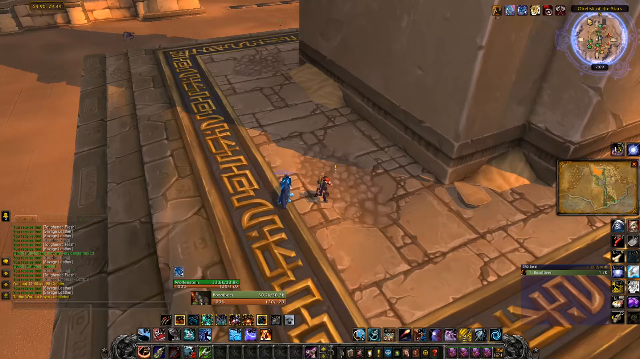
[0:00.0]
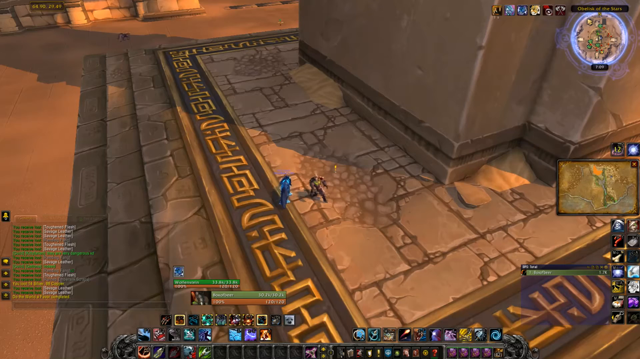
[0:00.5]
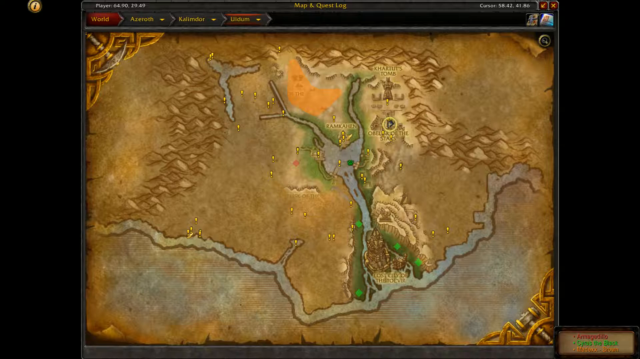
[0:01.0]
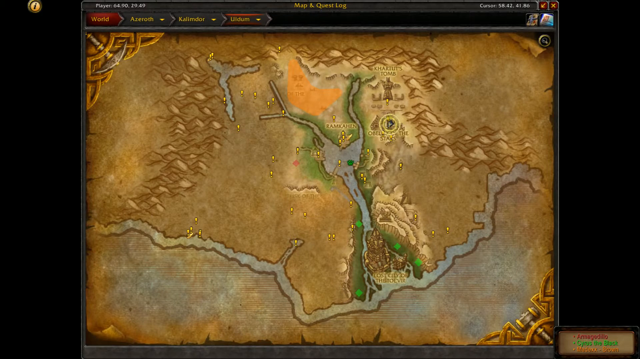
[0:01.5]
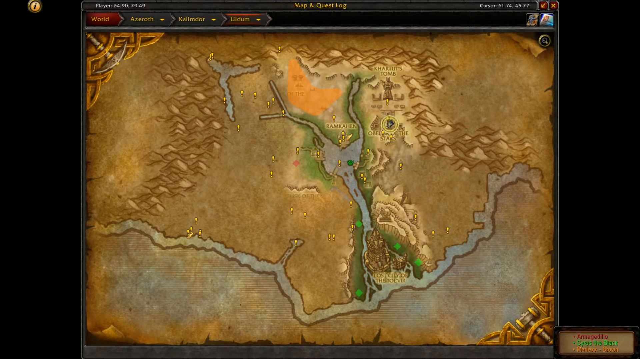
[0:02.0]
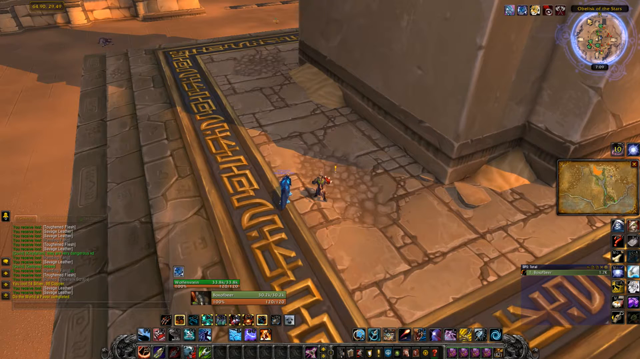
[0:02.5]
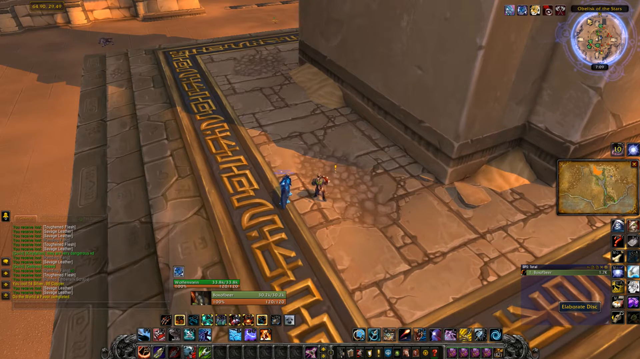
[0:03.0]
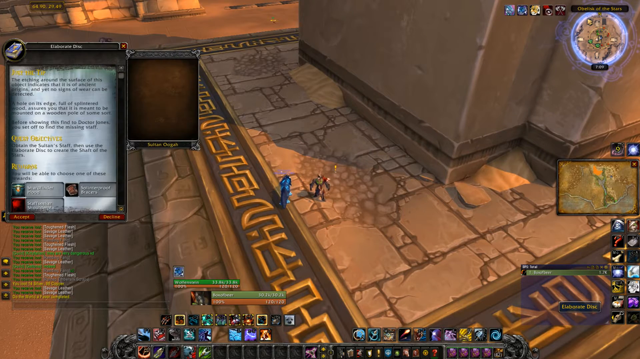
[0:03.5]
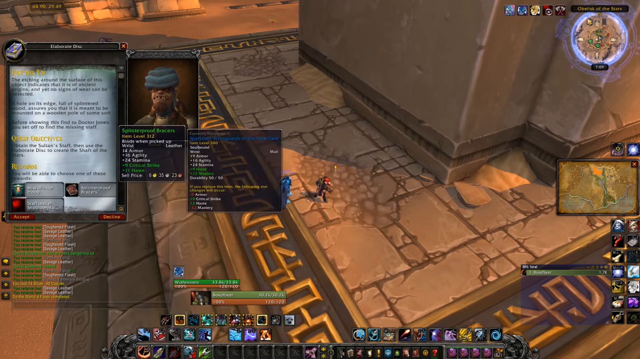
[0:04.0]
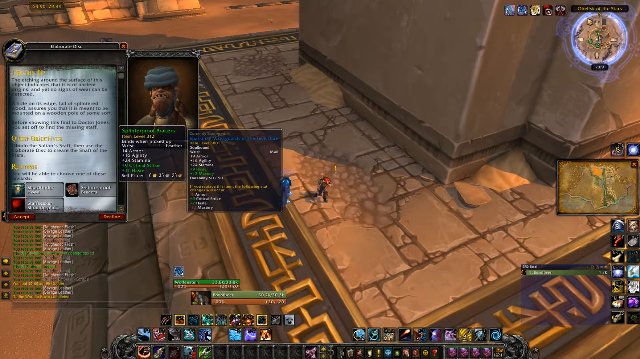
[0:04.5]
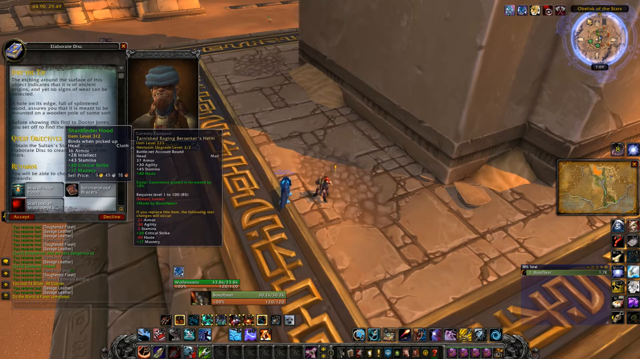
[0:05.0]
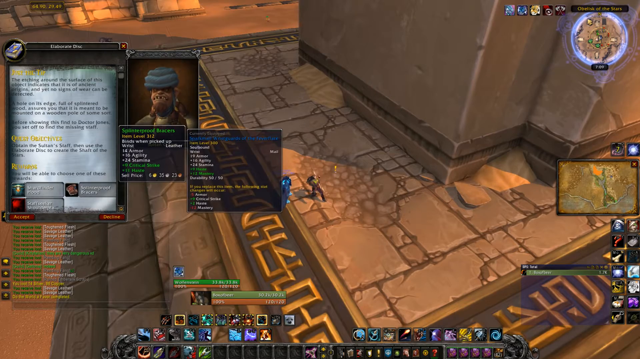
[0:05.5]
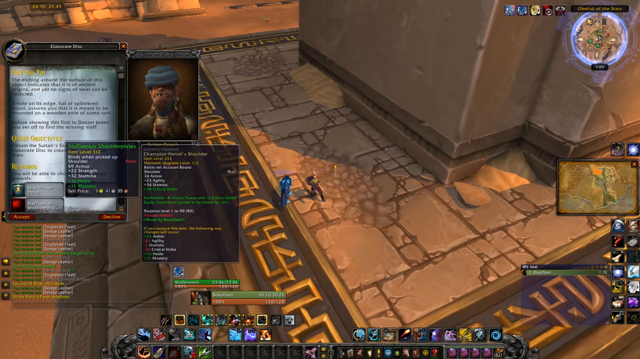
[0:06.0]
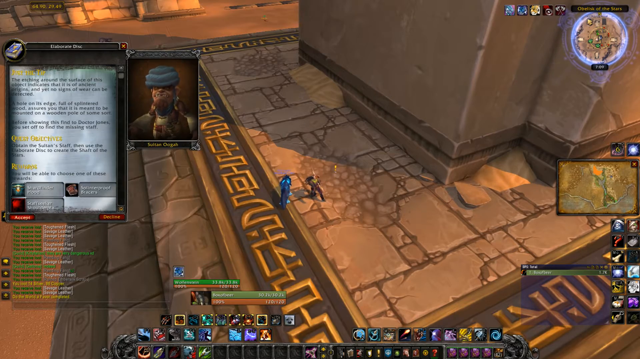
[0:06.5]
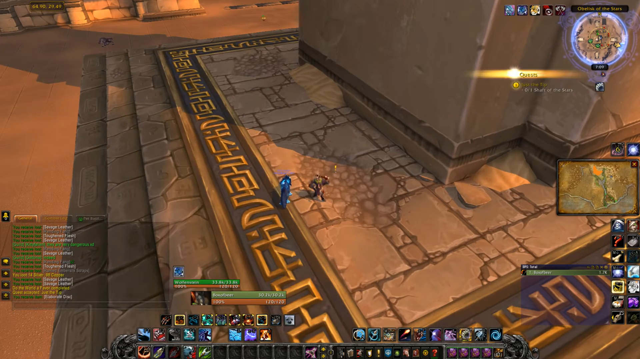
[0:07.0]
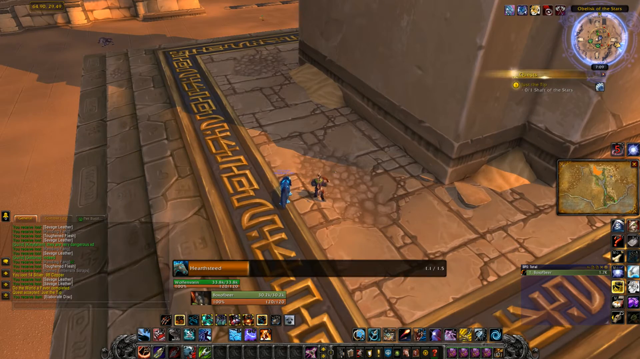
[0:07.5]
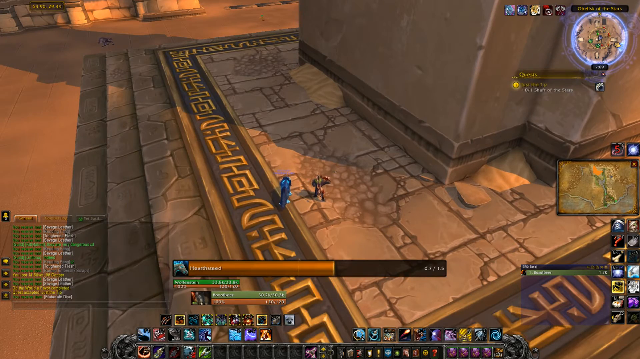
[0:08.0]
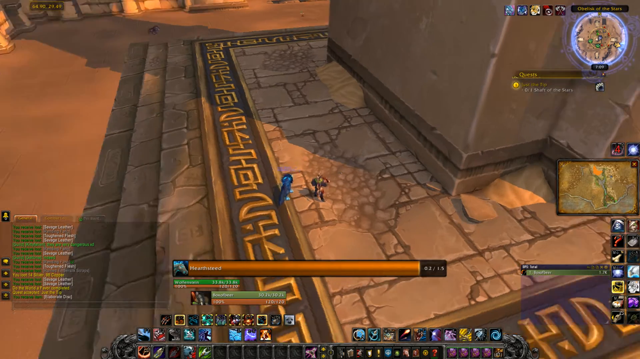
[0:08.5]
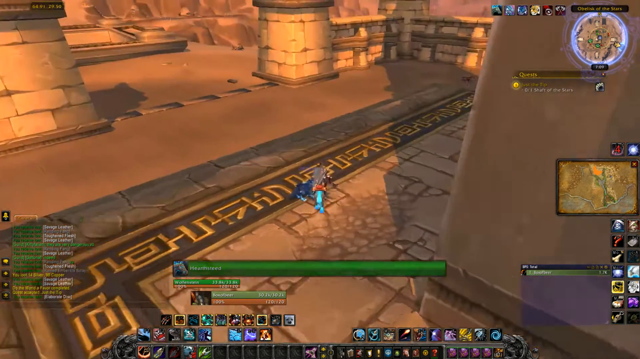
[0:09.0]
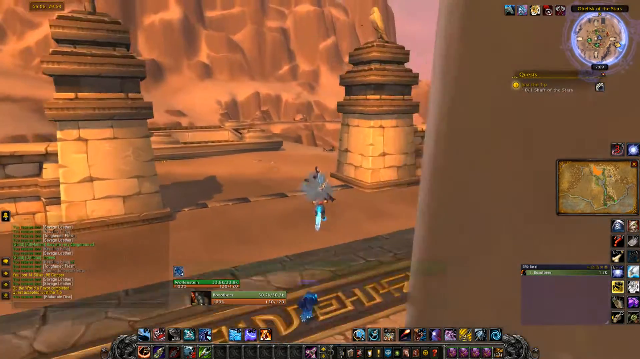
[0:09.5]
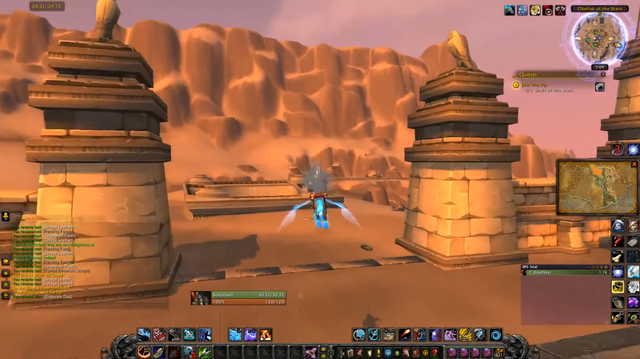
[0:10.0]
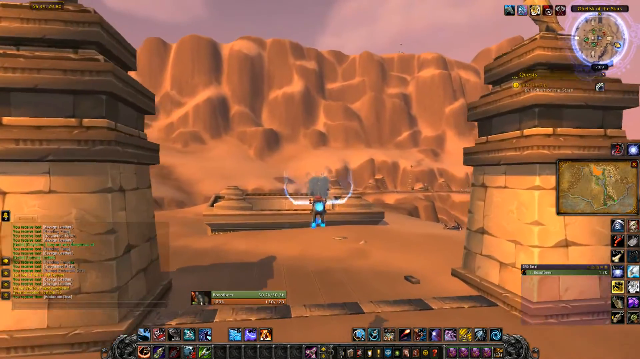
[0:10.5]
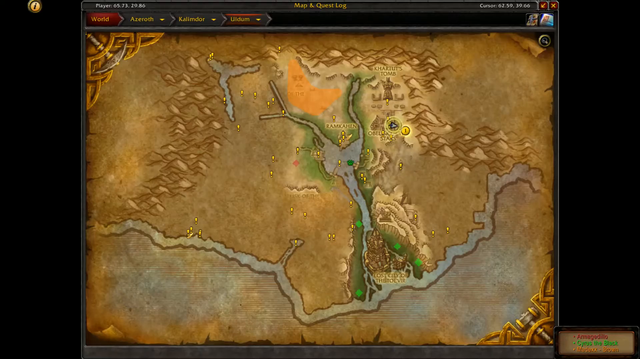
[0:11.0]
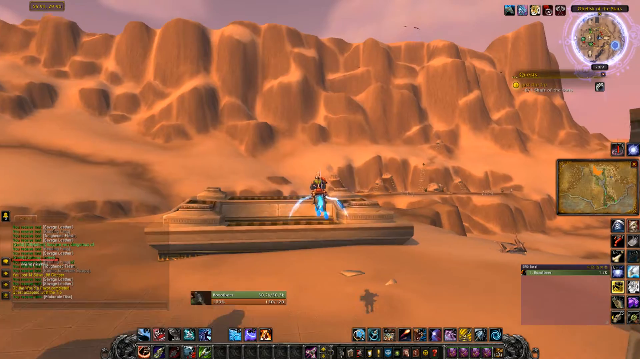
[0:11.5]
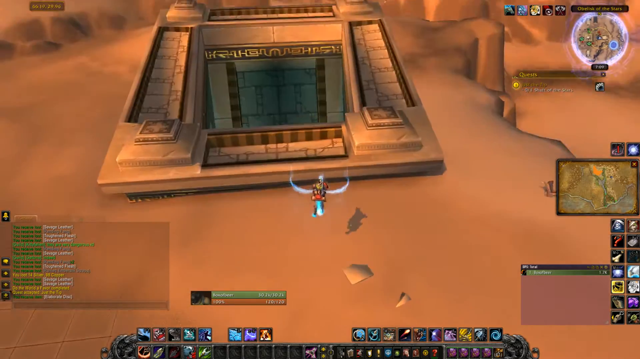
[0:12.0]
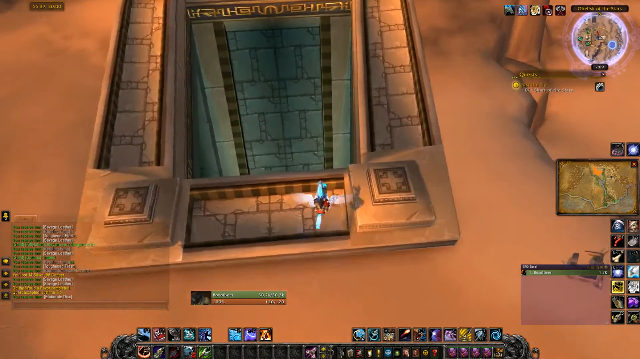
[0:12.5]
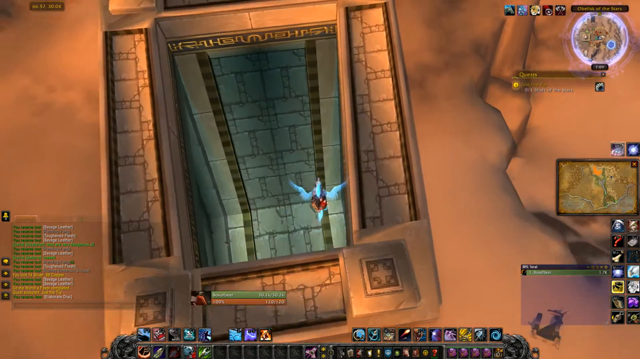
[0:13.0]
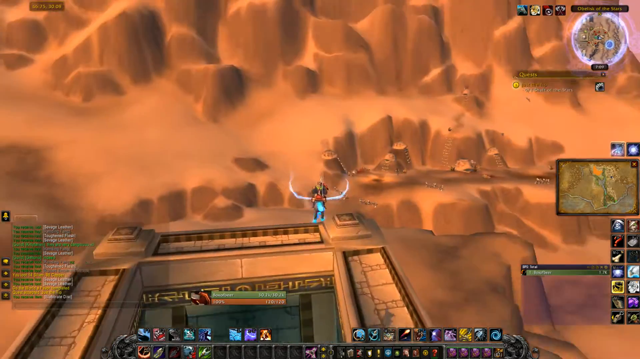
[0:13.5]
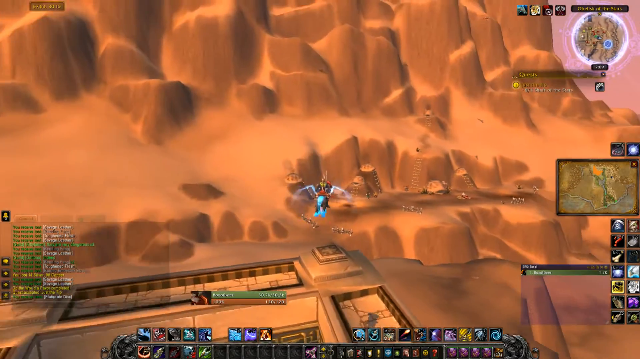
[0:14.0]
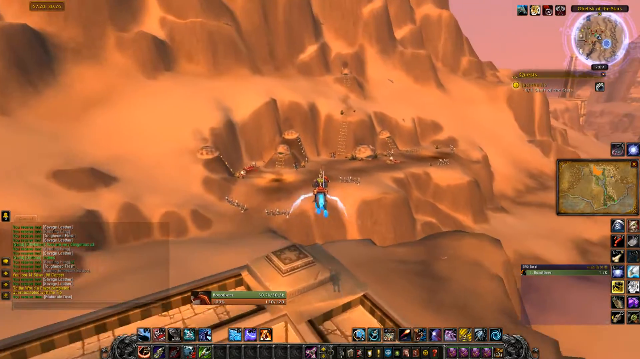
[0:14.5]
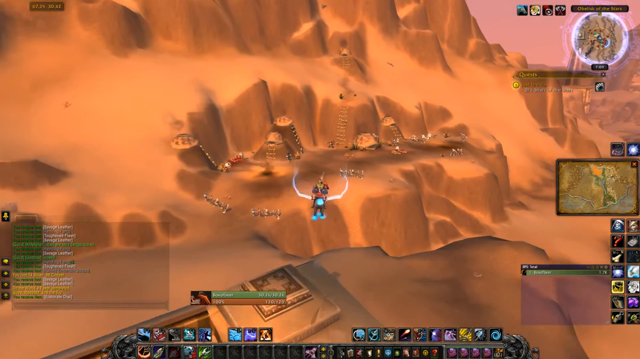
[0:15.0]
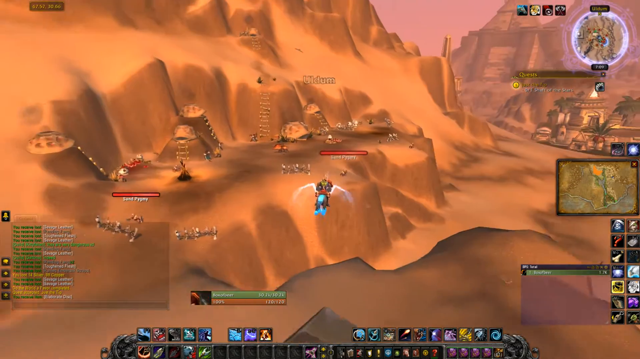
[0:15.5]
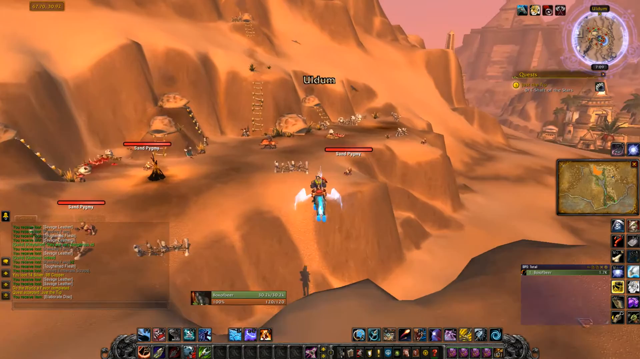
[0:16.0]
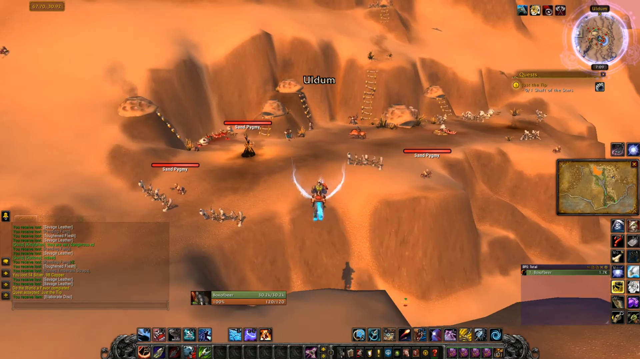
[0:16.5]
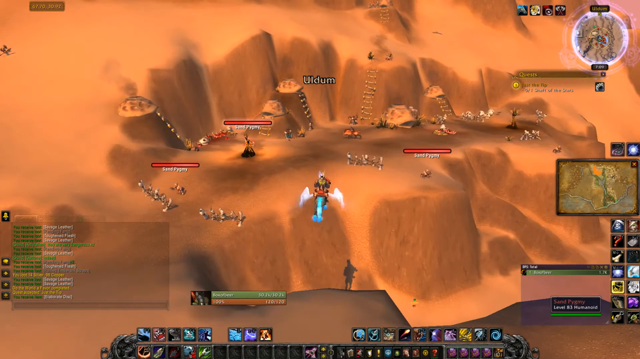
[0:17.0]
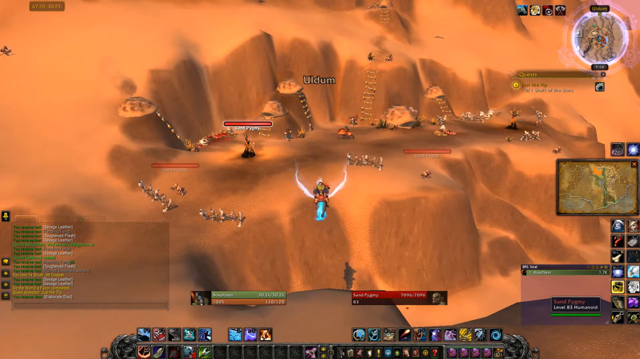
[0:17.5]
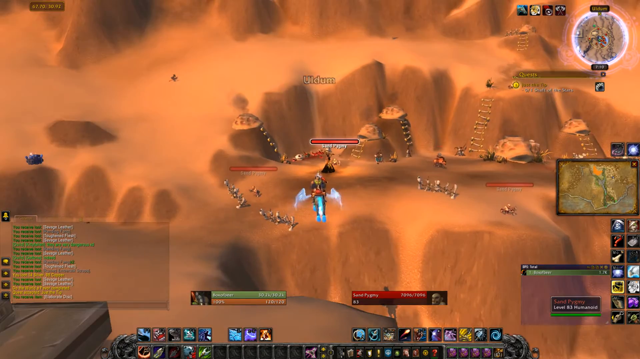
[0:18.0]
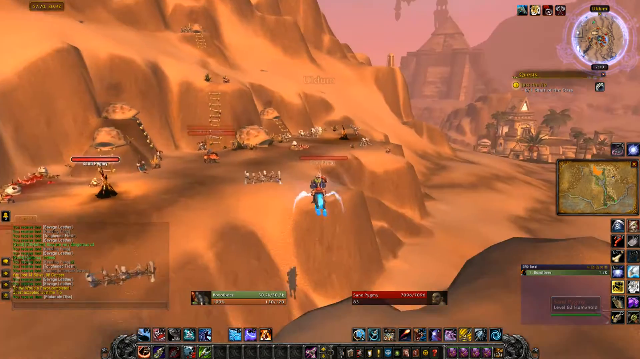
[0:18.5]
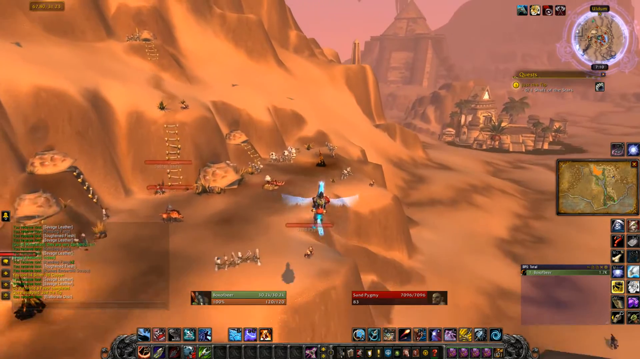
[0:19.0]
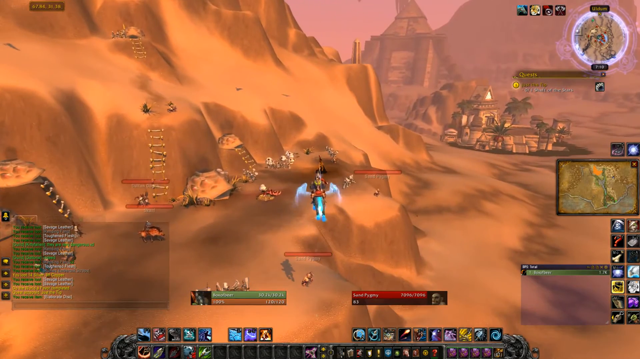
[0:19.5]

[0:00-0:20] The video opens on a video game that appears to involve two men engaging each other. Pop-ups appear on the screen very quickly. The two characters seem to be standing on the side of a castle or a building made of stone, with what appear to be four large steps leading up to it. One character wears blue and the other wears red. The character in blue appears to change from the form of a man into the form of a mythical creature, and as he transforms he takes flight and flies away over the city surrounding the area where he was standing. He appears to soar high over the city, looking at the city beneath him as he continues through the sky. The mythical creature looks like a horse combined with a man and also a bird, as it has wings.